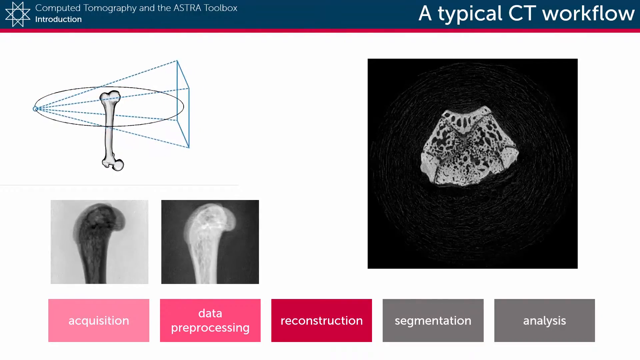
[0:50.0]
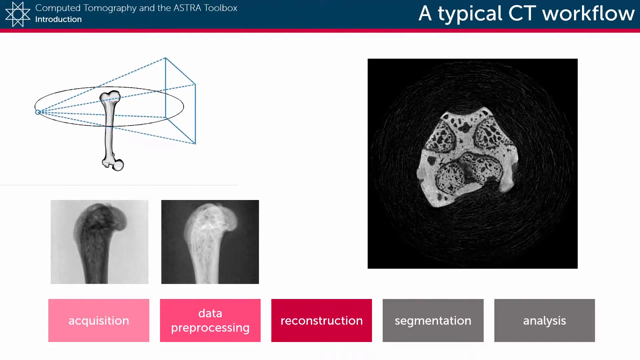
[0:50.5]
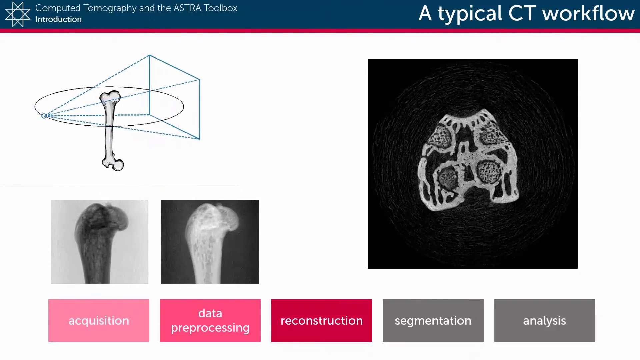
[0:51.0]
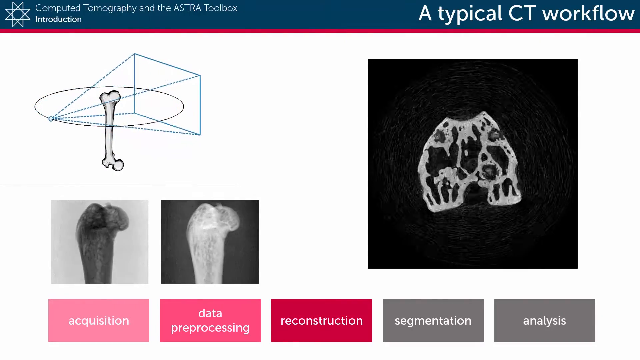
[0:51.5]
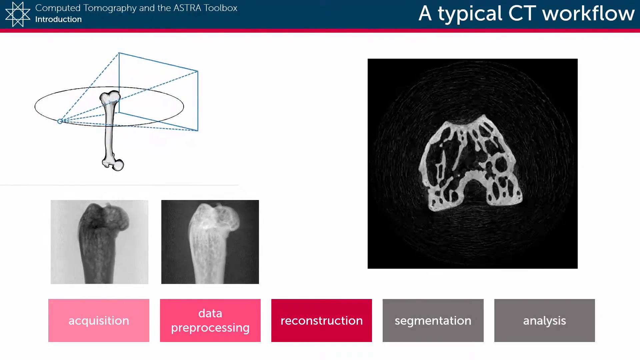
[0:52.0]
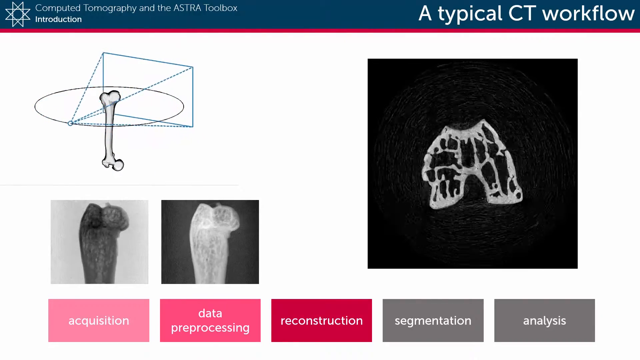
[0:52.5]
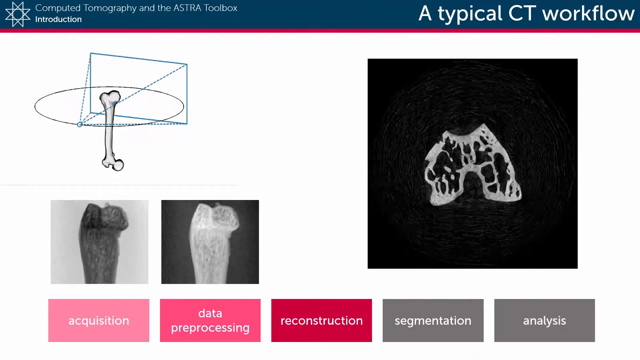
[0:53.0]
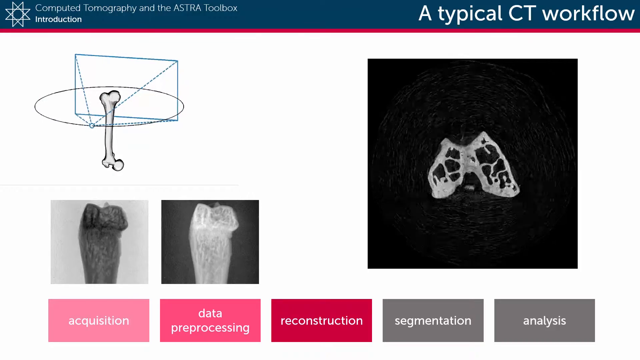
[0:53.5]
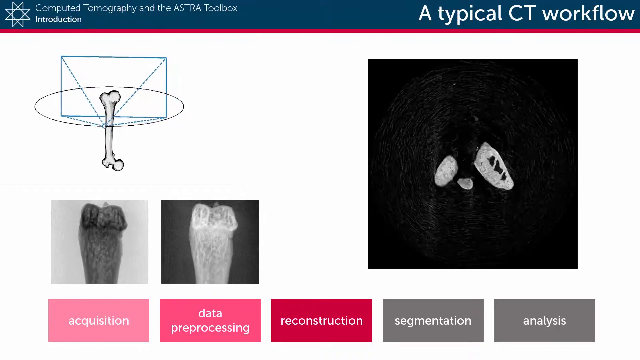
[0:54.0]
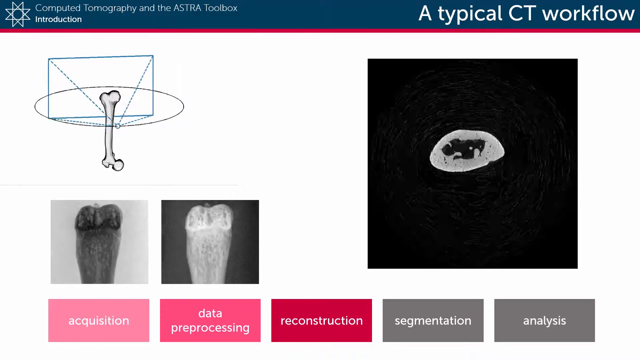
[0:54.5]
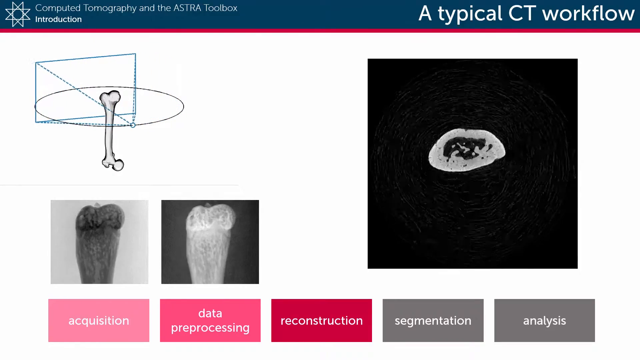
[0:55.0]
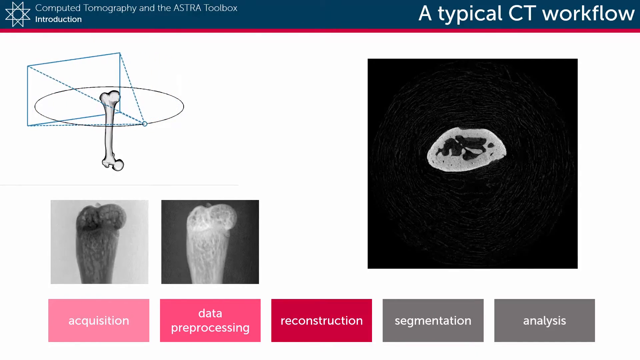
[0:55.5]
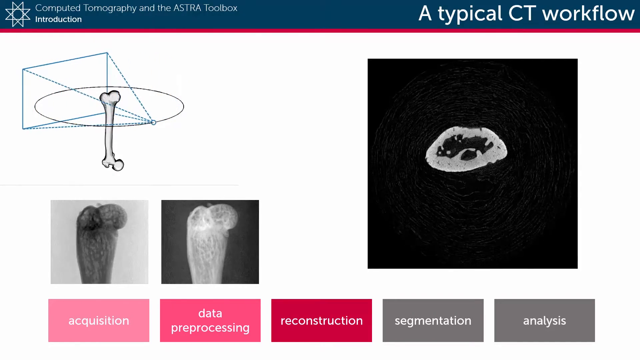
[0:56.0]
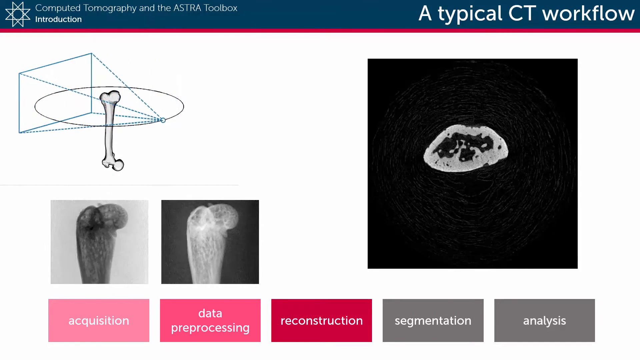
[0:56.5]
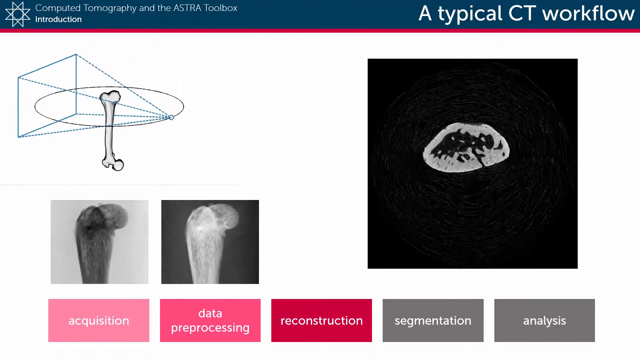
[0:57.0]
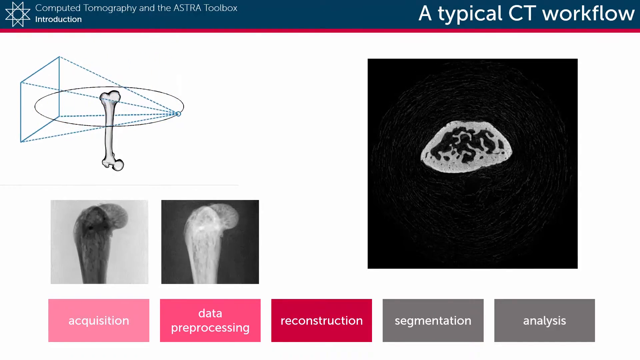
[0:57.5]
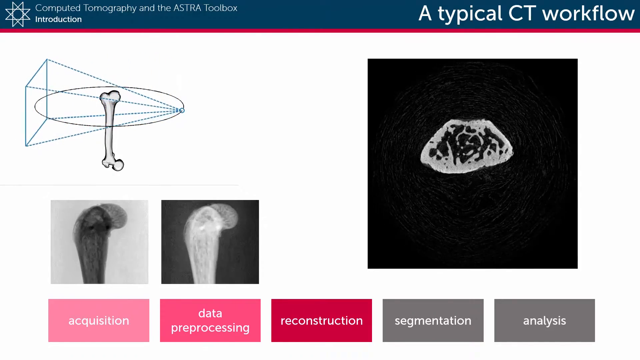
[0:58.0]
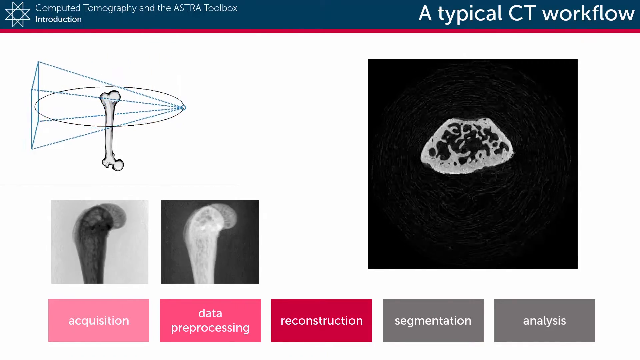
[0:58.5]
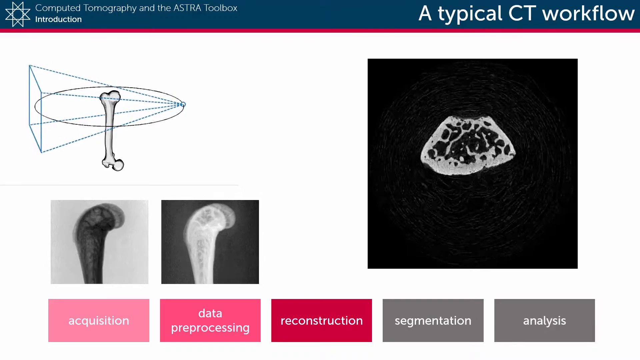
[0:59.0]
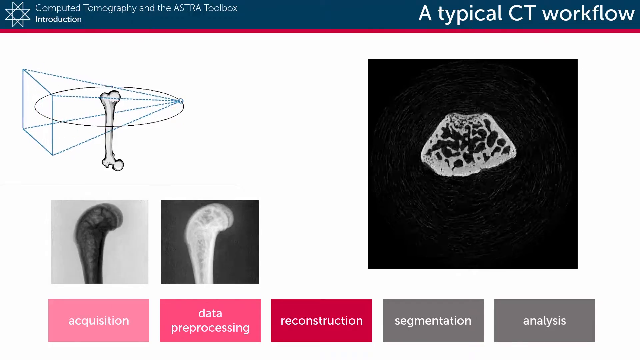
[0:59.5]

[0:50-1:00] At the bottom, the first three boxes are now red. Each time a new X-ray appears on the right side, a gray box turns red. The drawing on the left is still rotating, and the circle with the dotted lines is always on the opposite side from the solid rectangular border. The X-ray on the right is kind of moving and morphing, gets smaller and then is completely gone. It returns as a little circle ball that expands out again, while the drawing in the top left continues to rotate and both images in the bottom left rotate as well.